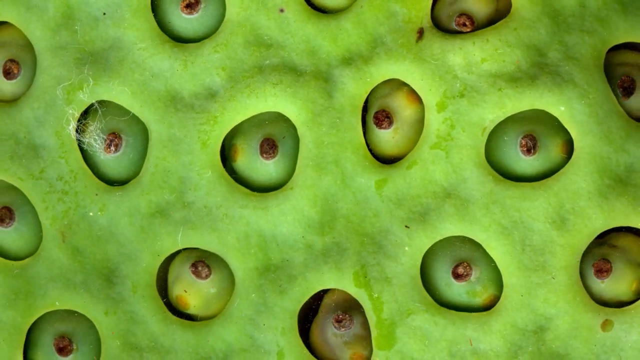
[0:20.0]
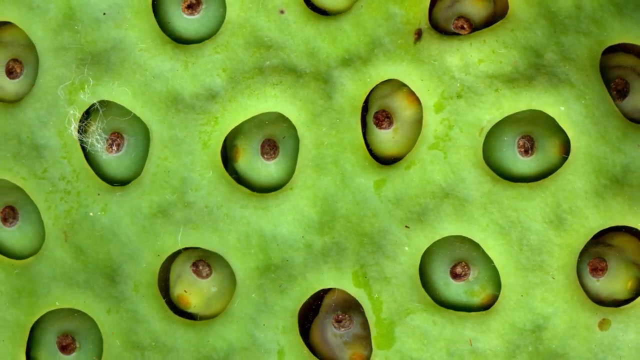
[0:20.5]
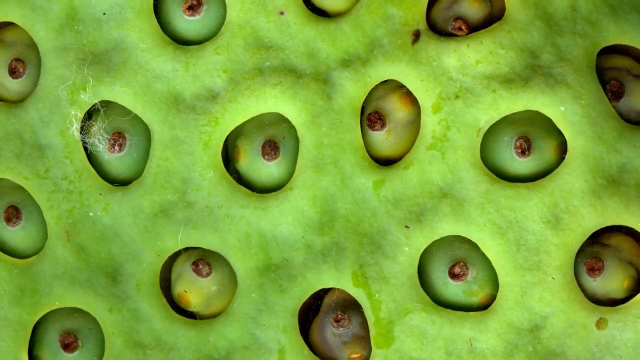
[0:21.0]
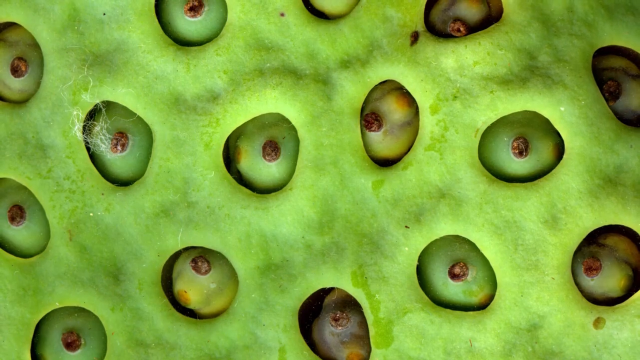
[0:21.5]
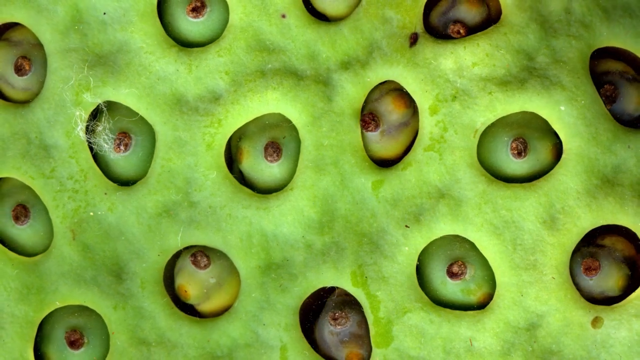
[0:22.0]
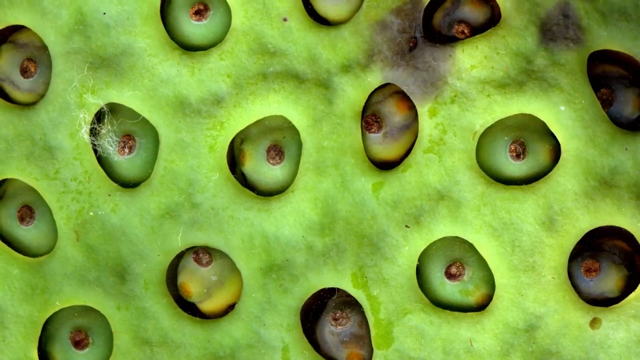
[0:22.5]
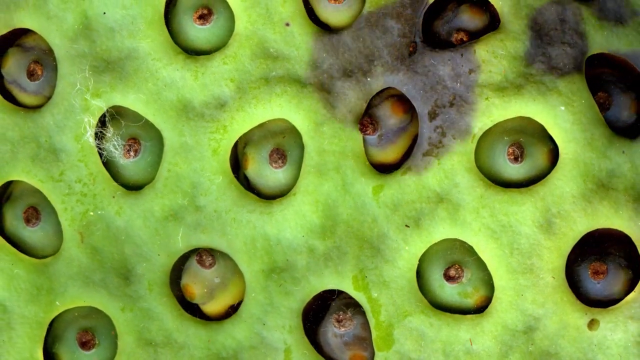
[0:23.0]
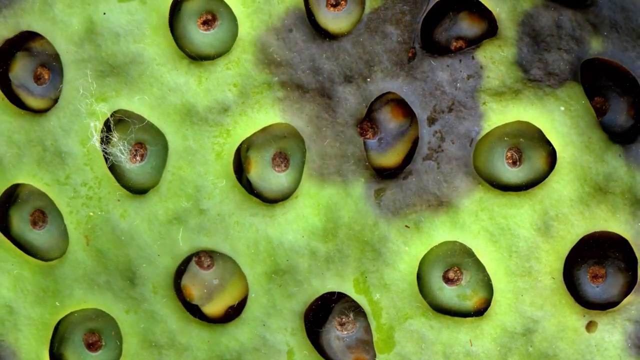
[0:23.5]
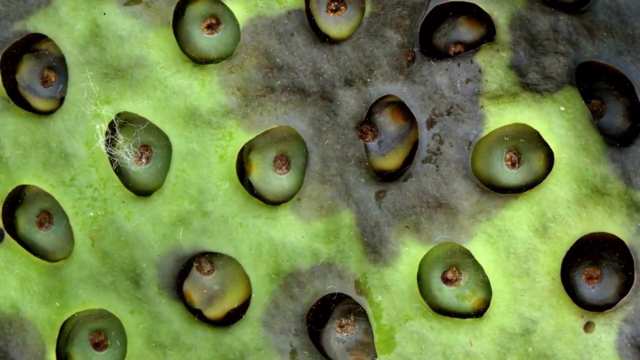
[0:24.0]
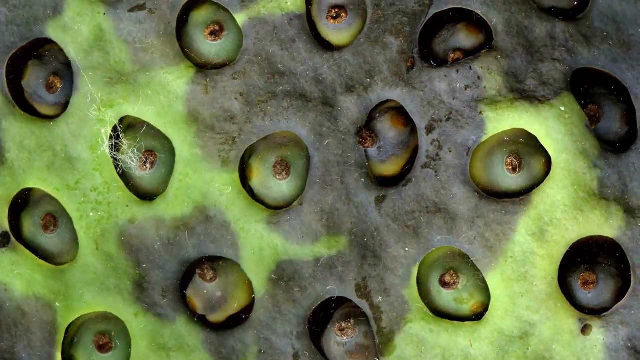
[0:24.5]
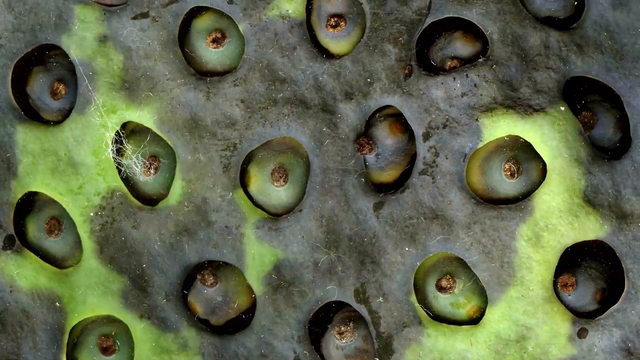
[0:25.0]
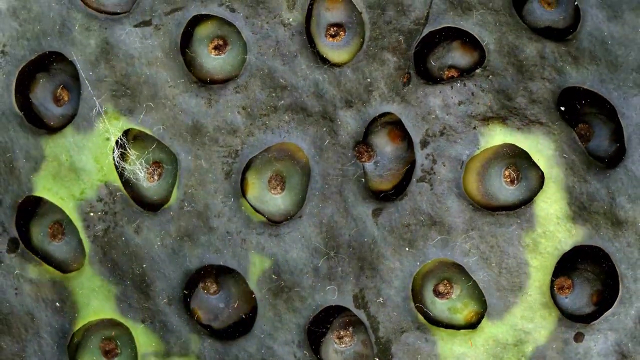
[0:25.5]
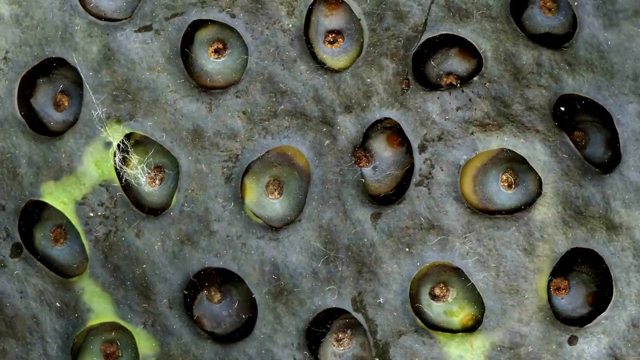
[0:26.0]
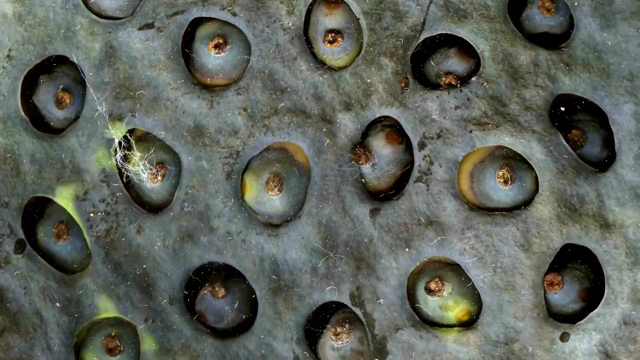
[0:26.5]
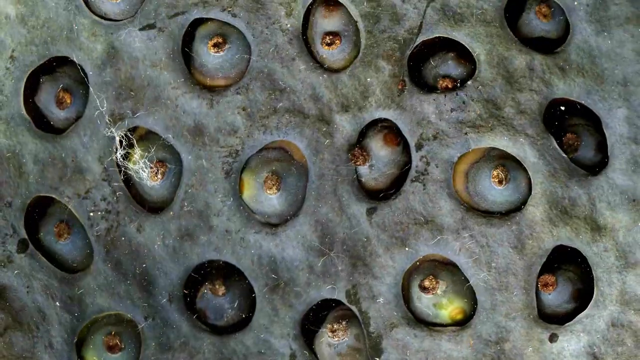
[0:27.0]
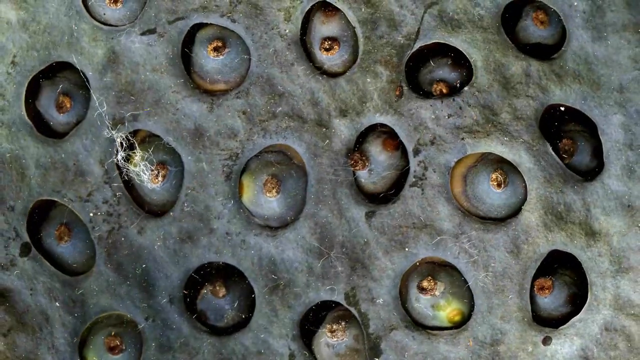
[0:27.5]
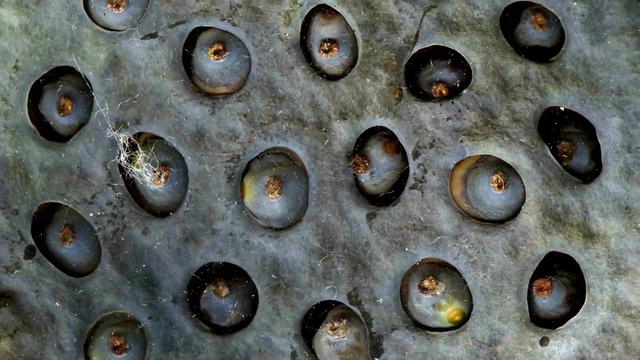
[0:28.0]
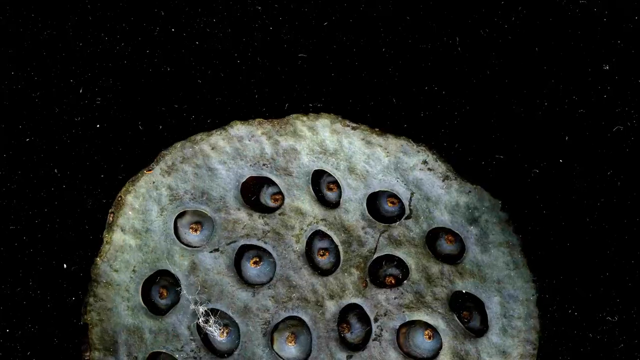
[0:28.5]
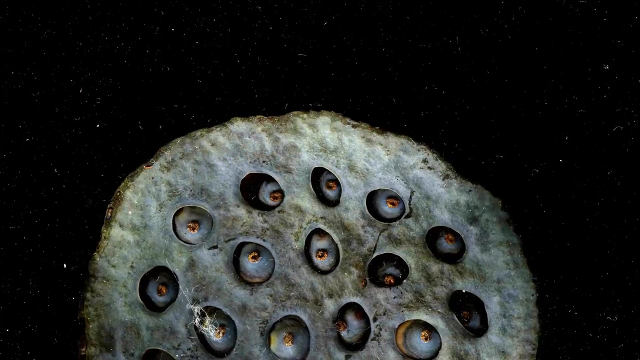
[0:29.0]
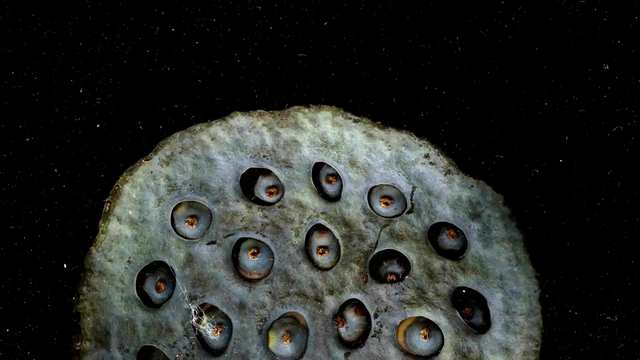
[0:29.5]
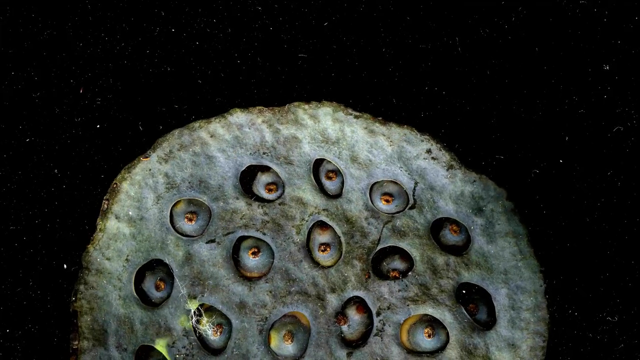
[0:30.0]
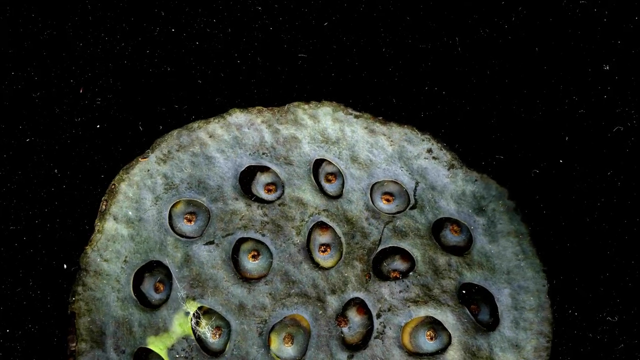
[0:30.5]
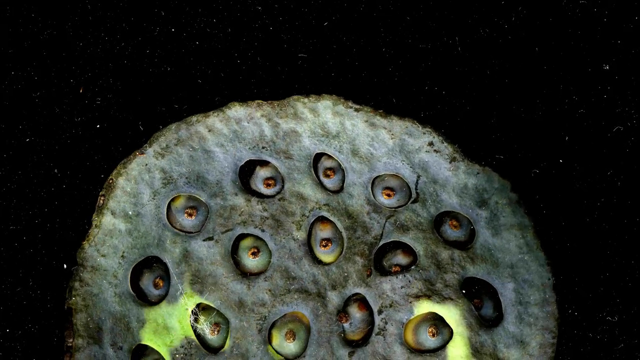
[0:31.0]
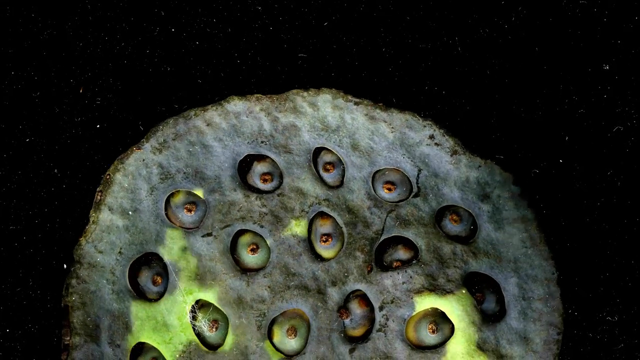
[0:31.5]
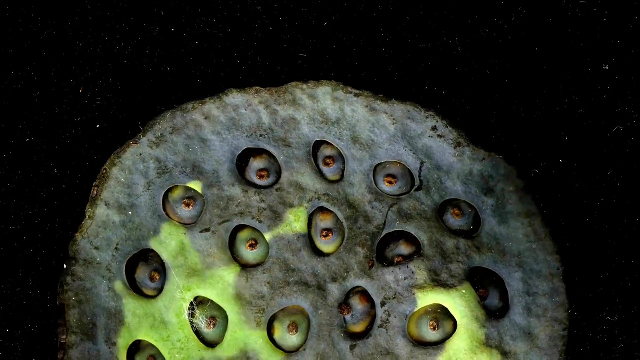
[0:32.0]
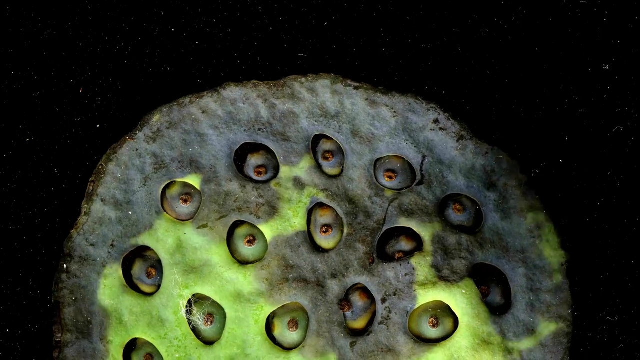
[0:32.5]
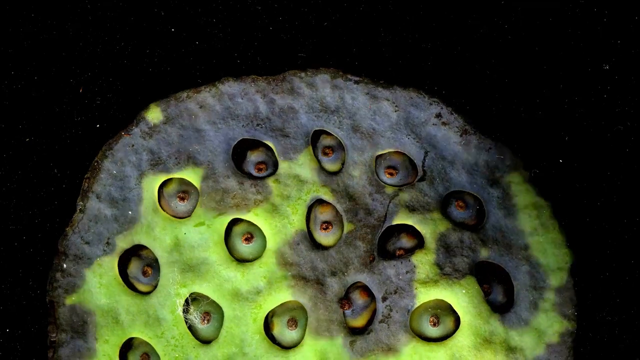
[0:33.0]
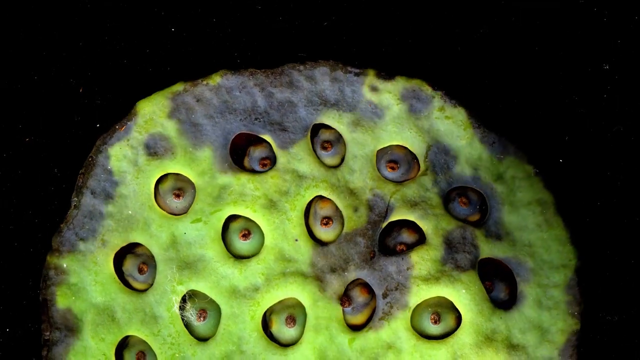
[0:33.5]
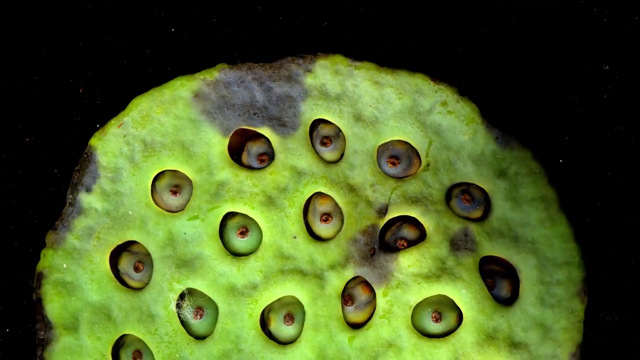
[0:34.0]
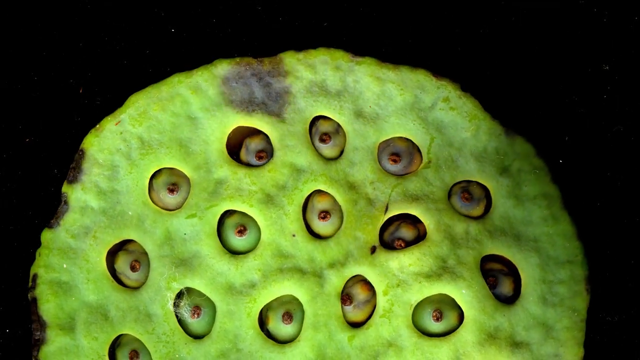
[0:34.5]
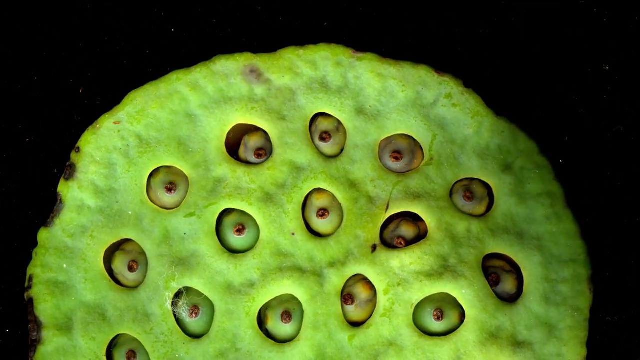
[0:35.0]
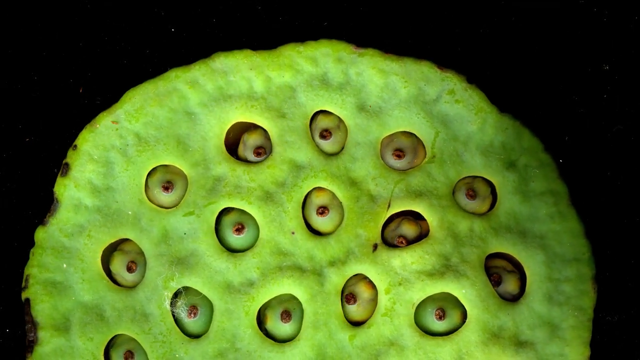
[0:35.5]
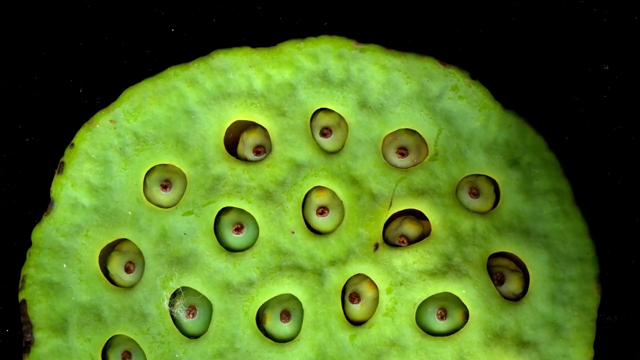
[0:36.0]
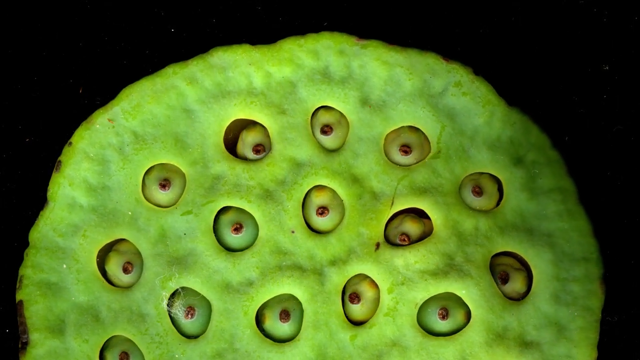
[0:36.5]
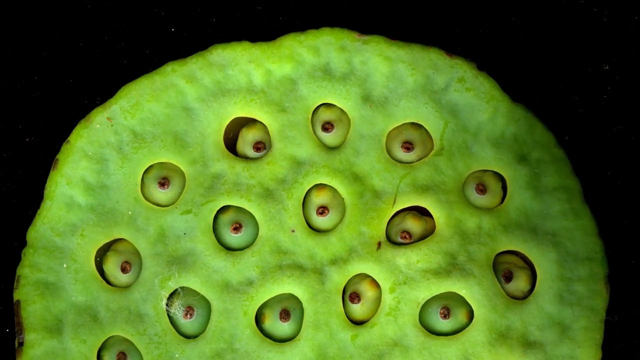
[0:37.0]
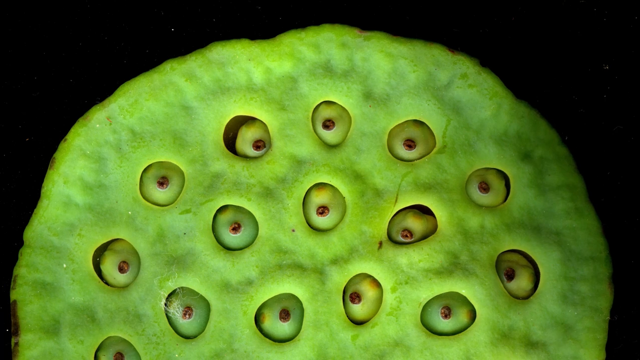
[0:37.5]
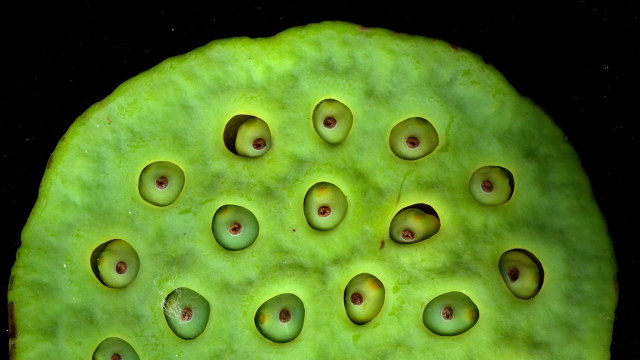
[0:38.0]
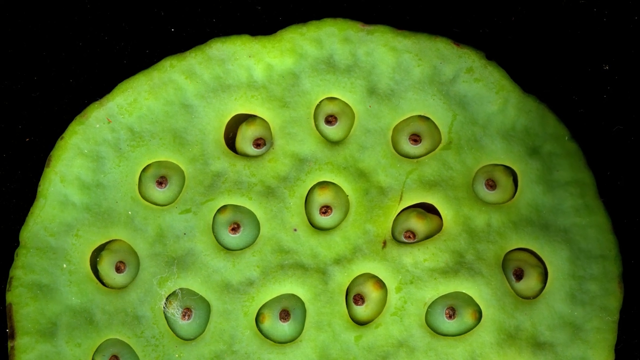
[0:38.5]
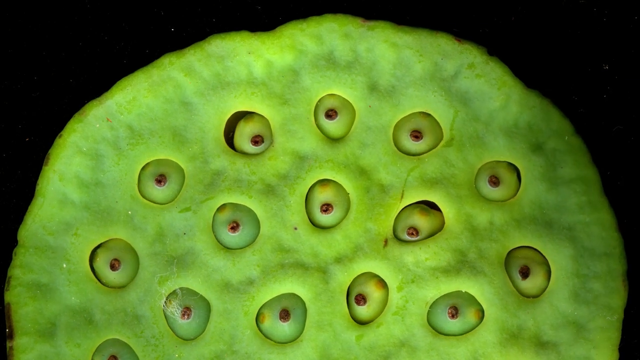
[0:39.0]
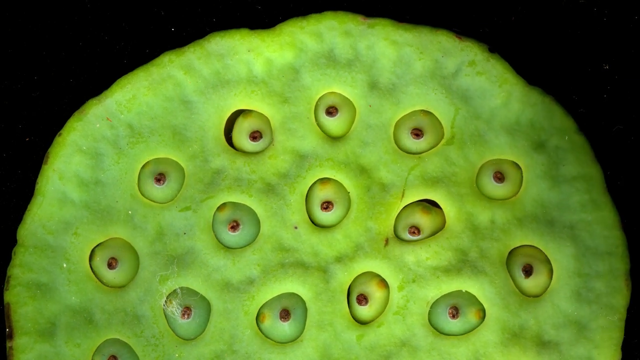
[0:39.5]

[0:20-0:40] Starting from the point where the berries, skin and flesh are green, everything retracts and turns grey, almost as if it is dying, then goes black until all the berries are black. A view from further out then shows that this is some sort of circular plant against a black background, with grey flesh, these sort of seed pods inside, and a sort of rough brown outer layer. Everything goes green again, becoming green and fleshy, filling out and looking healthier. The seed pods settle into the slots, and it becomes much more like some sort of plant, with everything seeming to fit together much better. It finishes green, with the seed pods in the holes that seem to hold them.